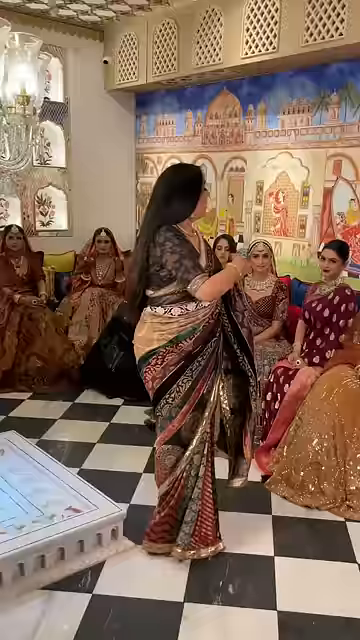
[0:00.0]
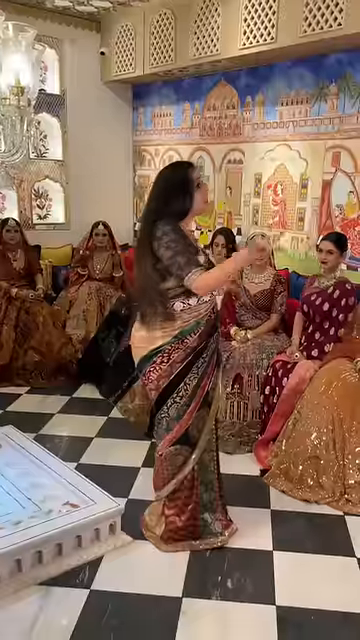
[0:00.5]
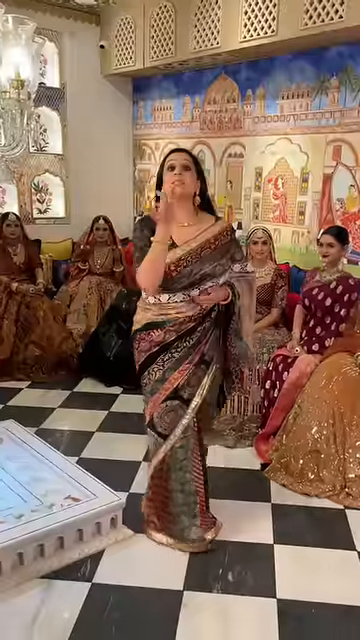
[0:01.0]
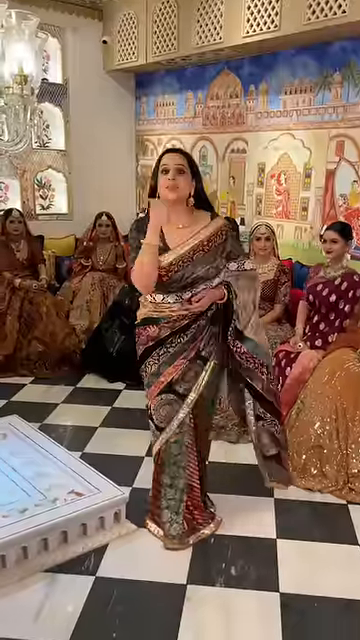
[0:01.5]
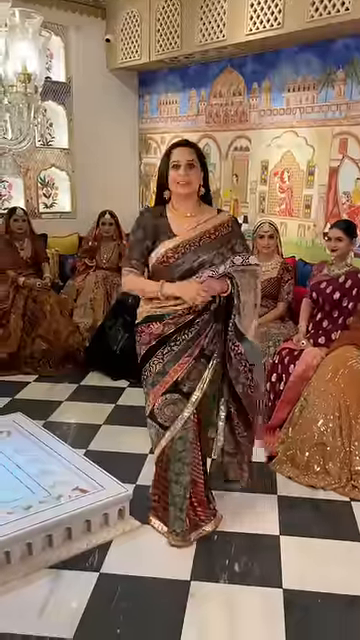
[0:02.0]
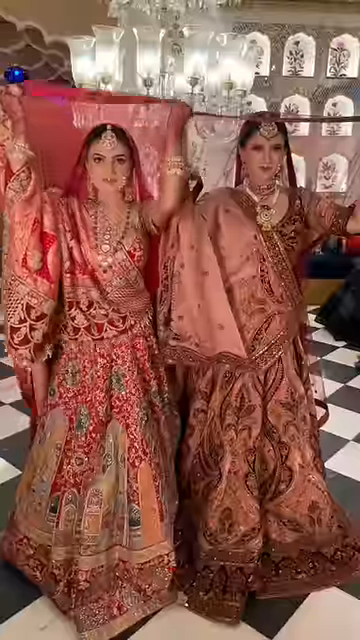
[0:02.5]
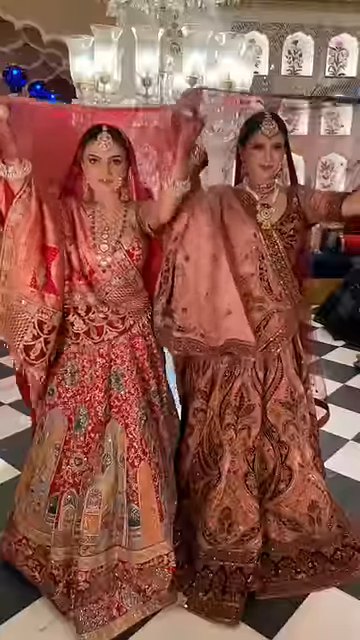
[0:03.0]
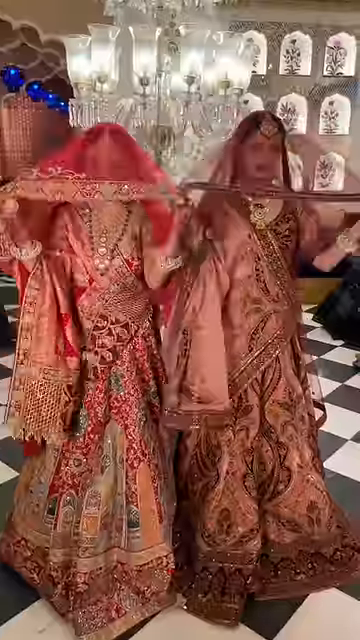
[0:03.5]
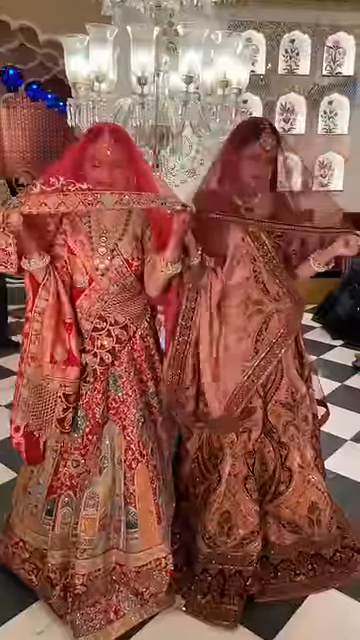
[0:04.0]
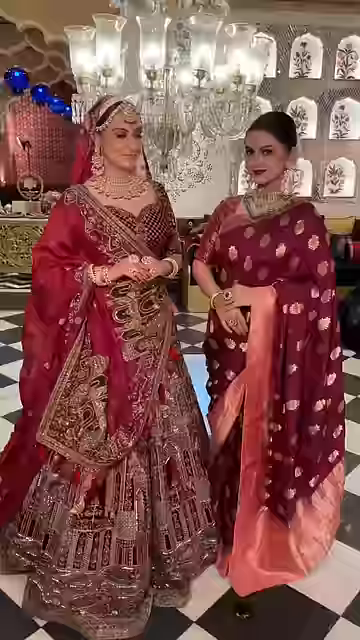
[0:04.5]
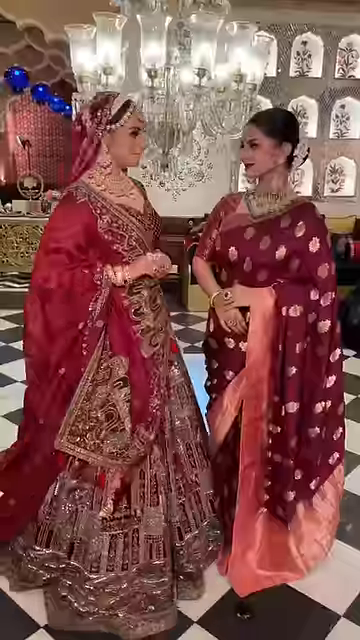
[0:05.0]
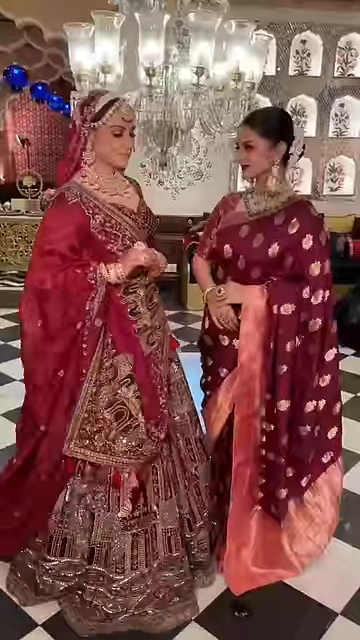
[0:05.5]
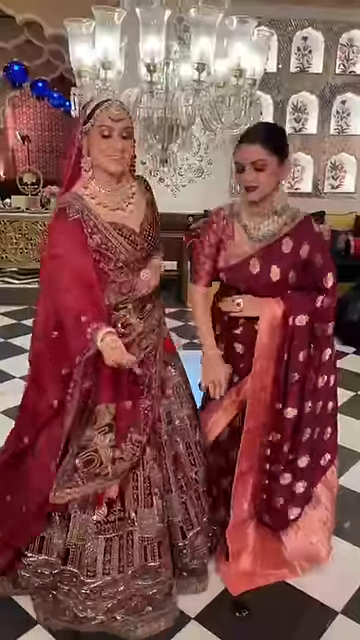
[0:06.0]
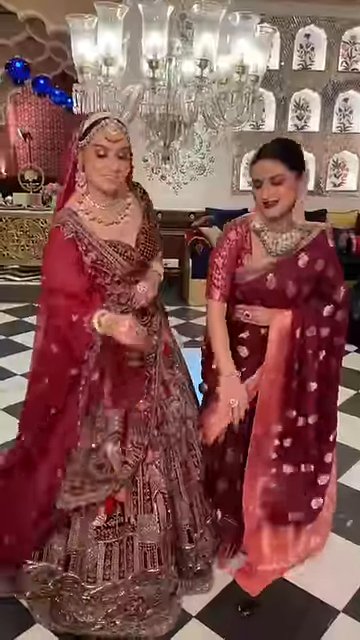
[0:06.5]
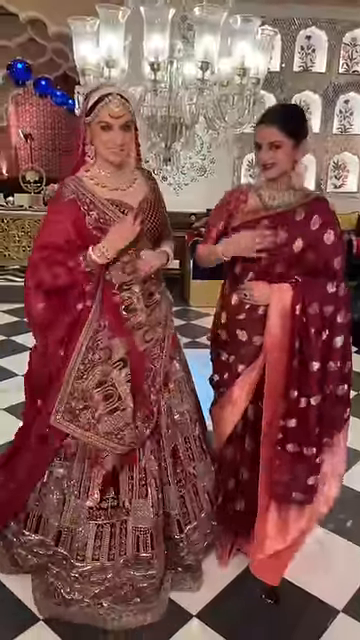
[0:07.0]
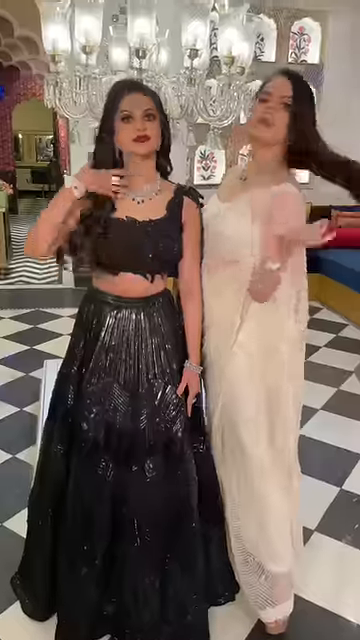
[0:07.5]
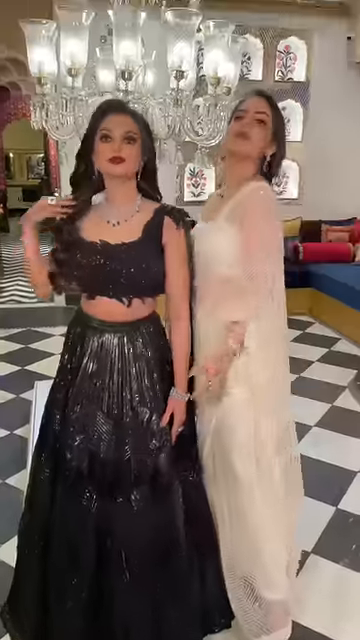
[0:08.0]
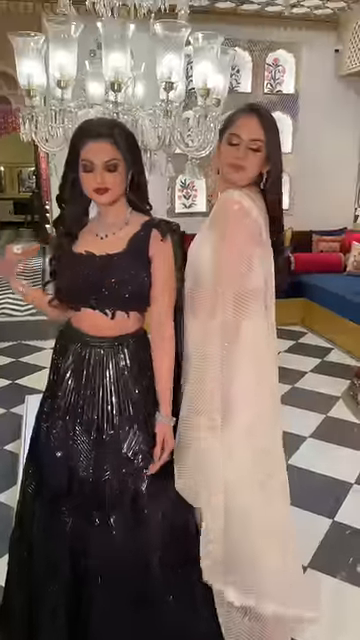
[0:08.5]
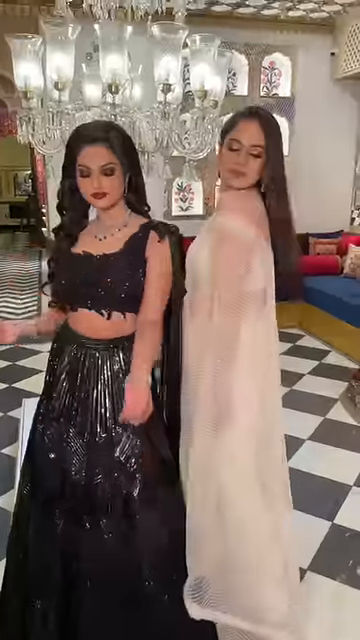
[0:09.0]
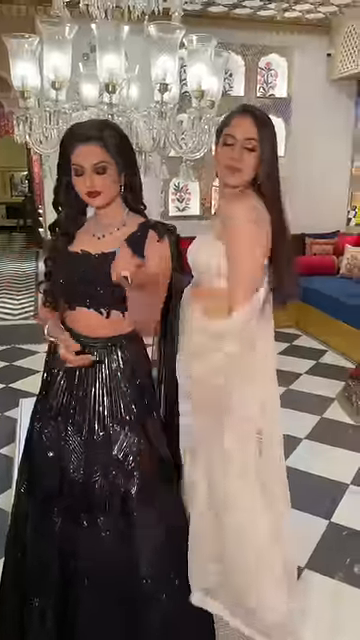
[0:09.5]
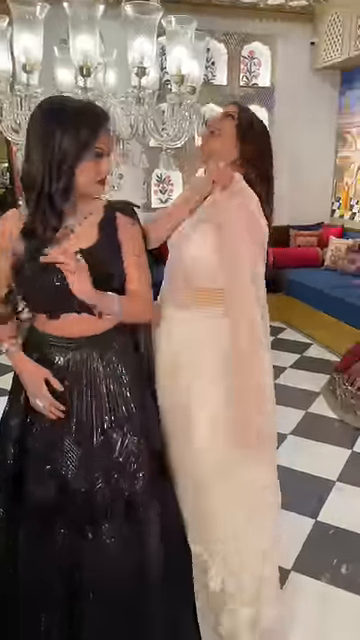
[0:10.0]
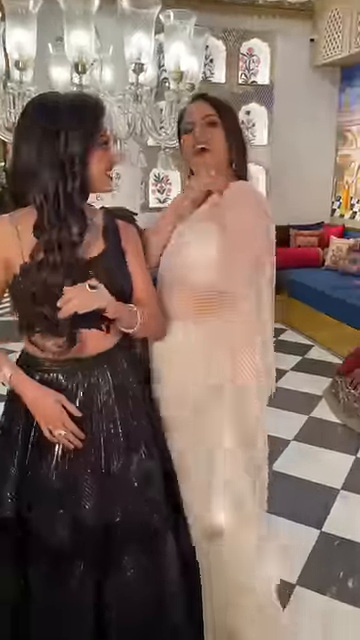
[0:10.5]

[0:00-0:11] A slightly older woman dressed in fancy Indian attire talks to a group of what appear to be Indian brides, who are also dressed in their wedding gowns, before she turns to the camera and addresses it in some manner. The video then cuts to two of the brides putting on veils. The bride on the left wears ornate red, gold and blue robes, while the one on the right wears what looks like rose gold wedding attire. The two women put the veils on themselves before the video cuts to another two women. The one on the left is in an ornate red and gold dress, while the one on the right is in a slightly more subdued red and rose gold robe. The one on the right is in a black dress, while the one on the left is in a white gown.